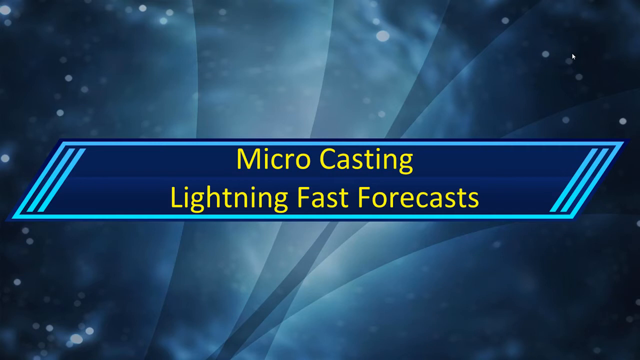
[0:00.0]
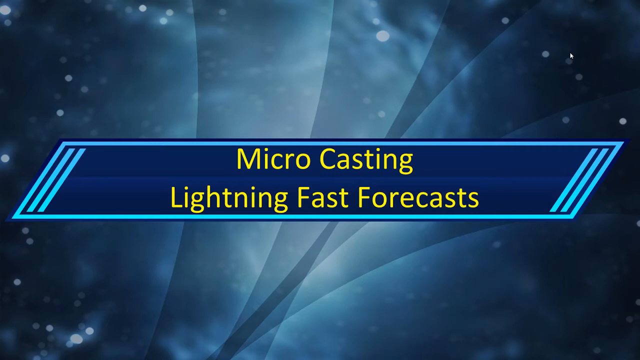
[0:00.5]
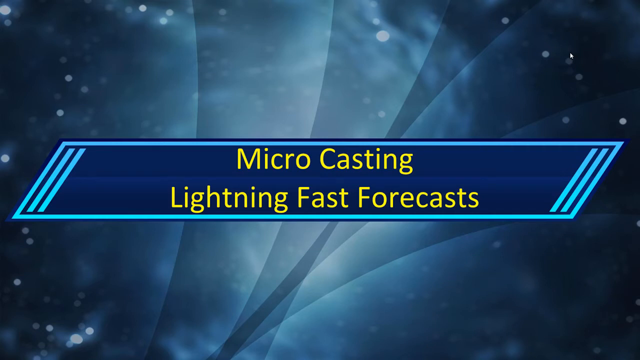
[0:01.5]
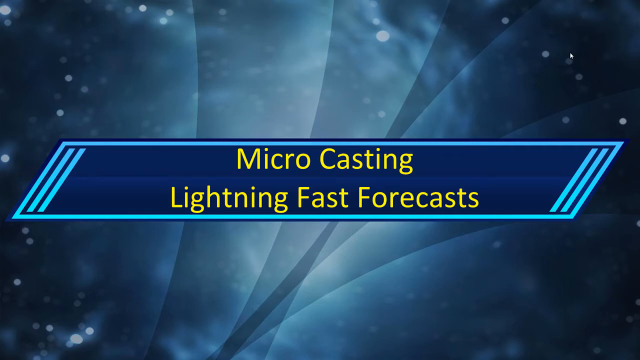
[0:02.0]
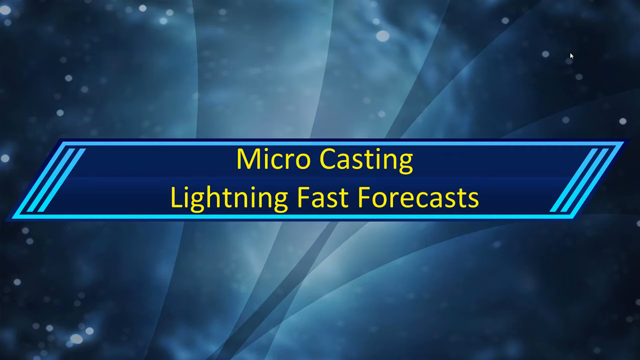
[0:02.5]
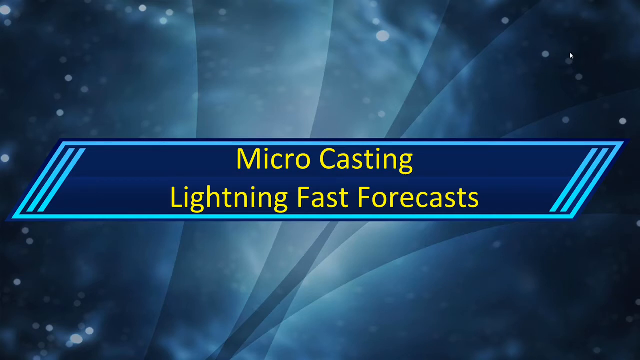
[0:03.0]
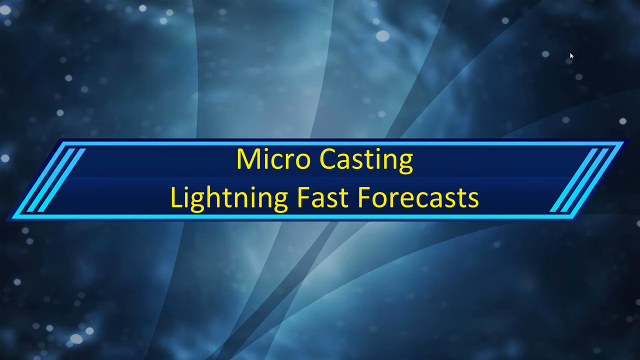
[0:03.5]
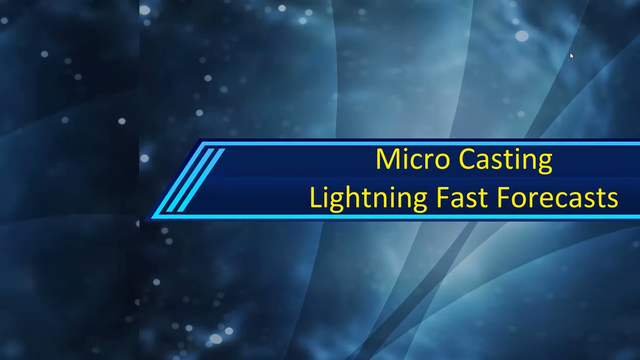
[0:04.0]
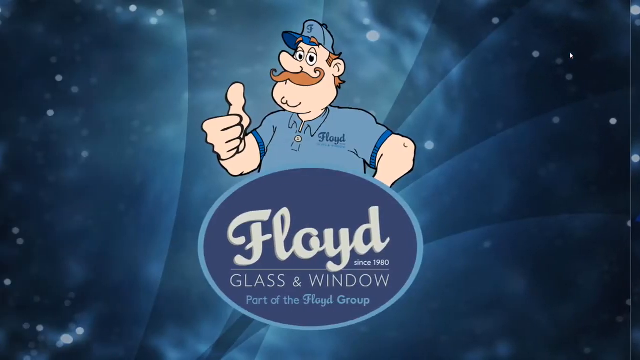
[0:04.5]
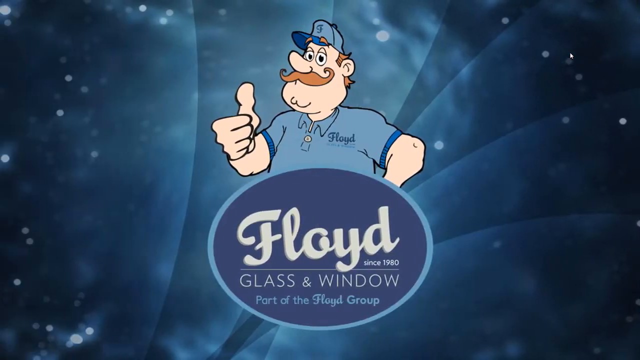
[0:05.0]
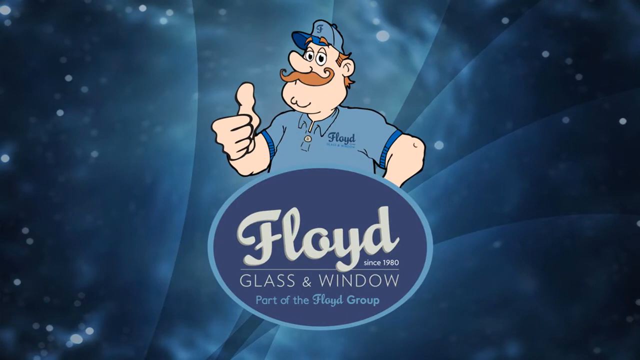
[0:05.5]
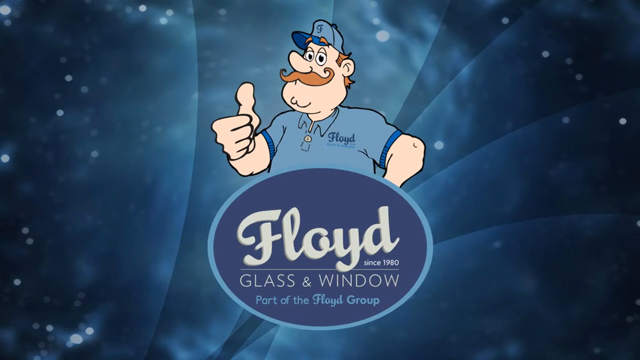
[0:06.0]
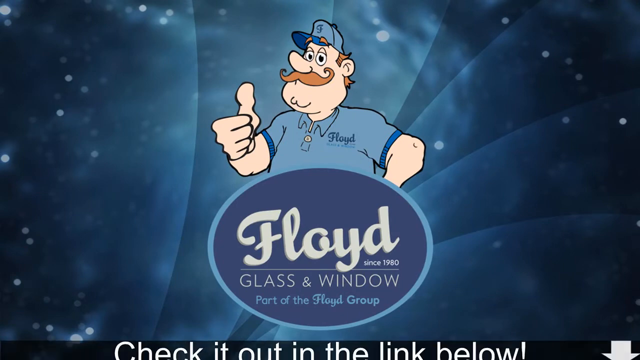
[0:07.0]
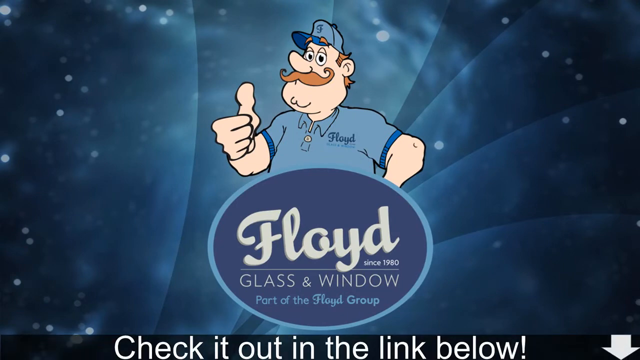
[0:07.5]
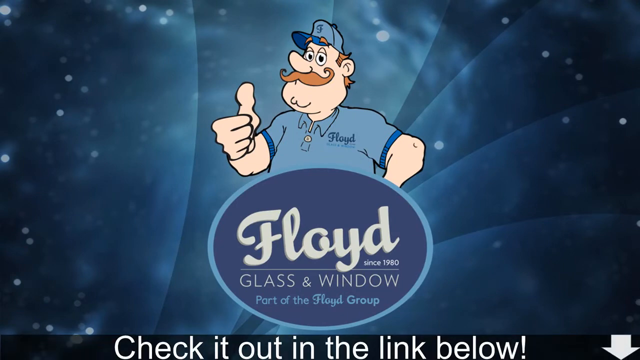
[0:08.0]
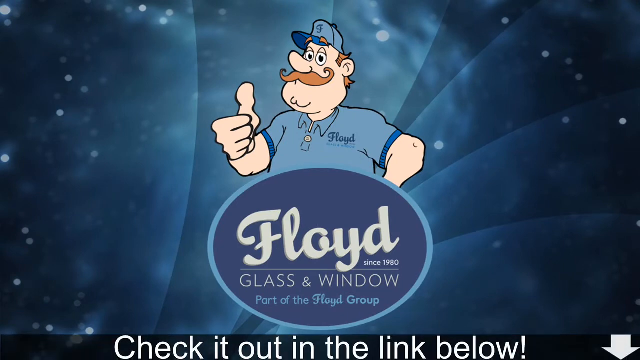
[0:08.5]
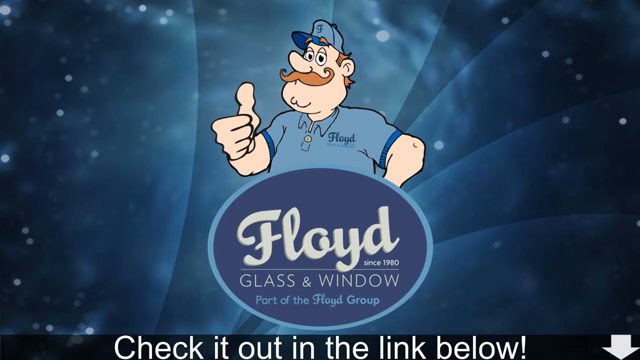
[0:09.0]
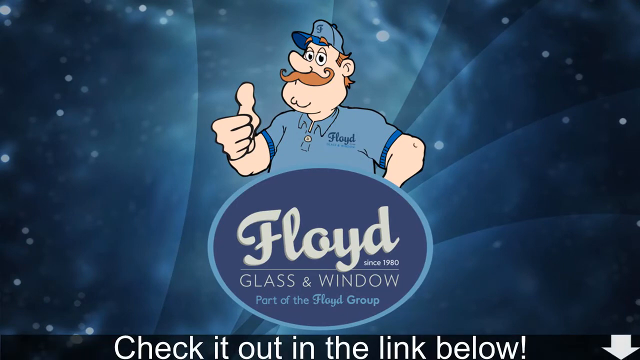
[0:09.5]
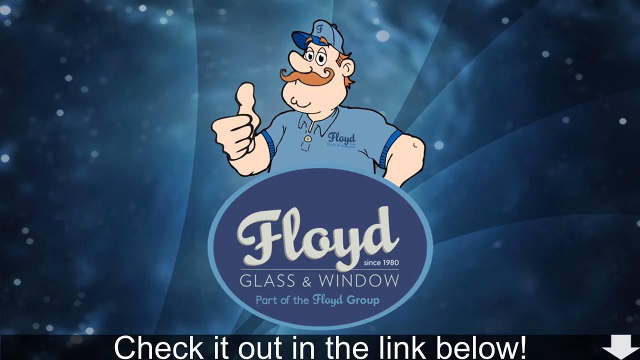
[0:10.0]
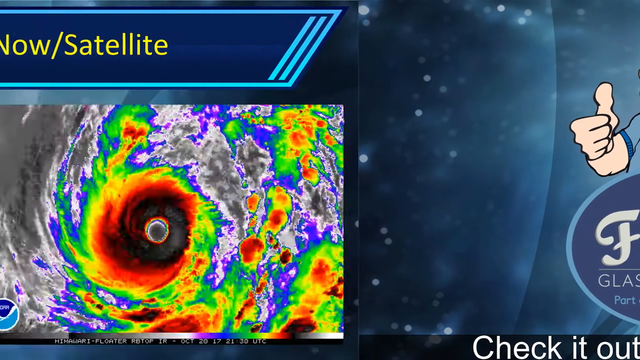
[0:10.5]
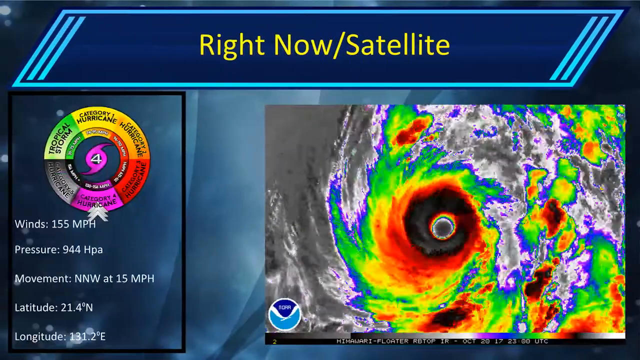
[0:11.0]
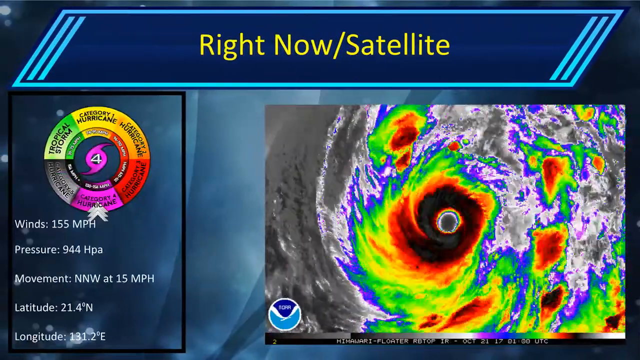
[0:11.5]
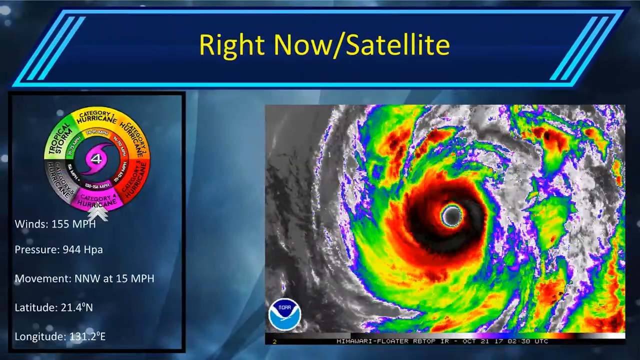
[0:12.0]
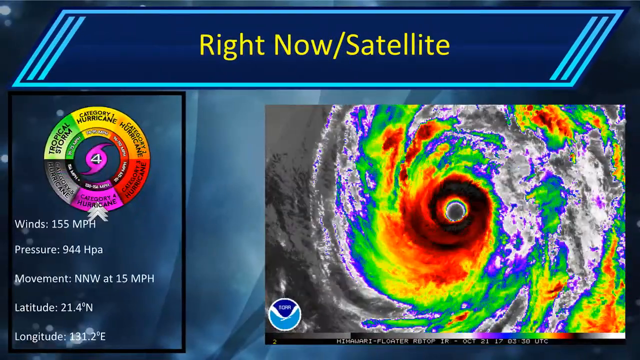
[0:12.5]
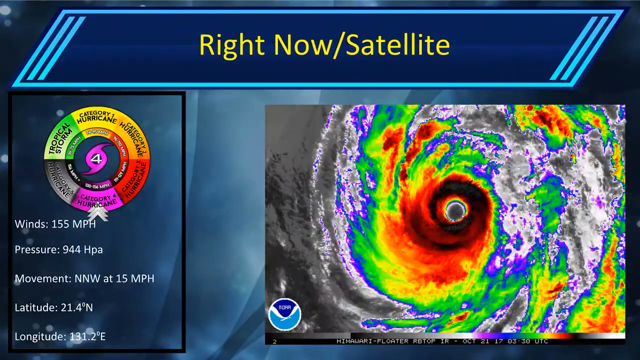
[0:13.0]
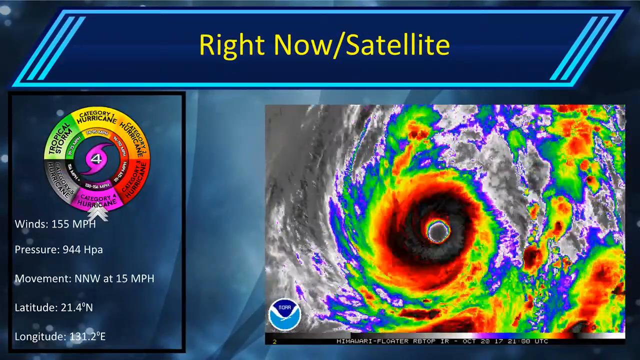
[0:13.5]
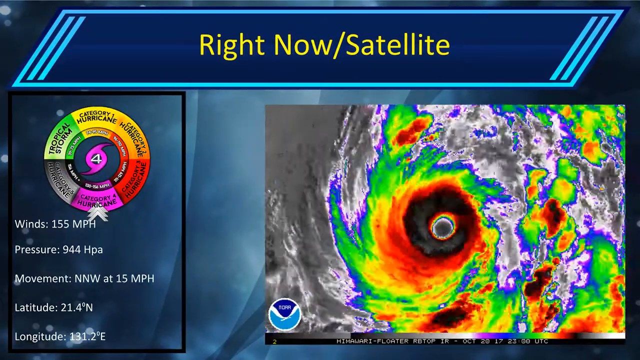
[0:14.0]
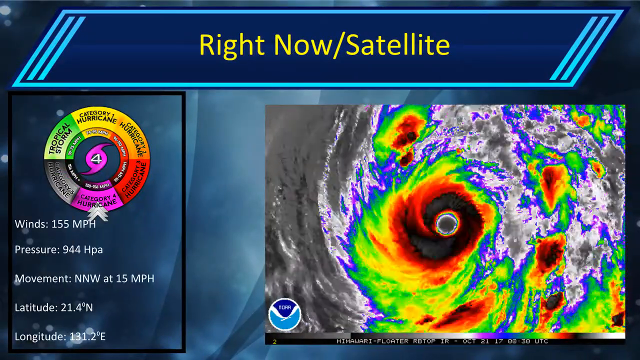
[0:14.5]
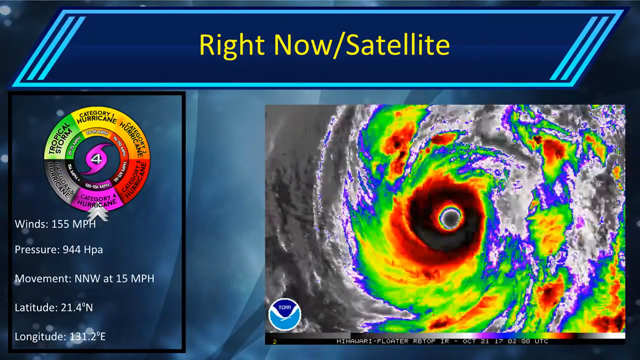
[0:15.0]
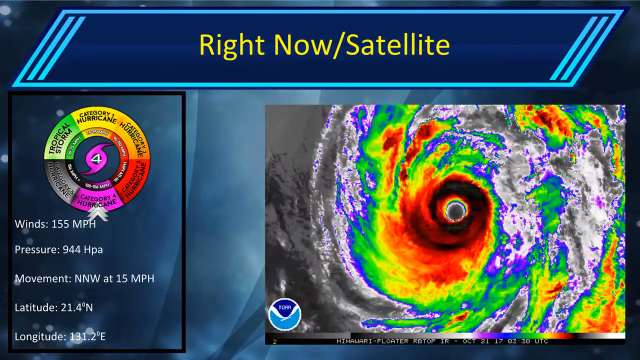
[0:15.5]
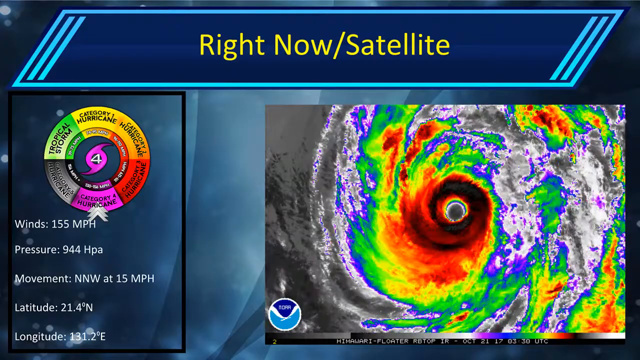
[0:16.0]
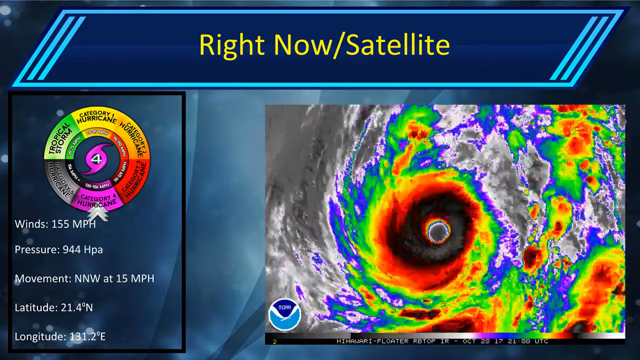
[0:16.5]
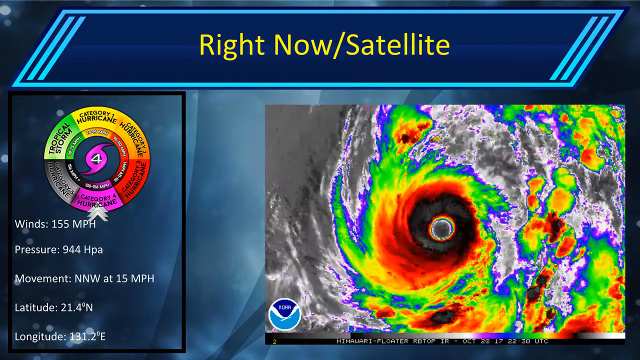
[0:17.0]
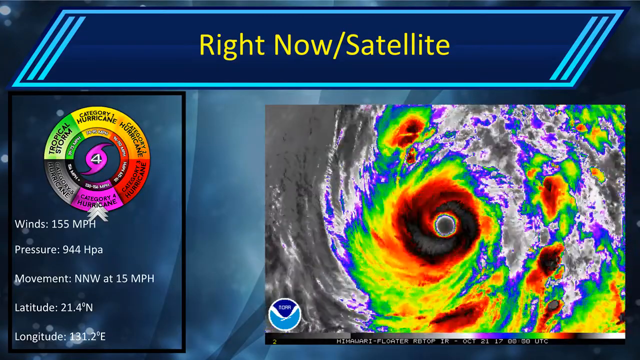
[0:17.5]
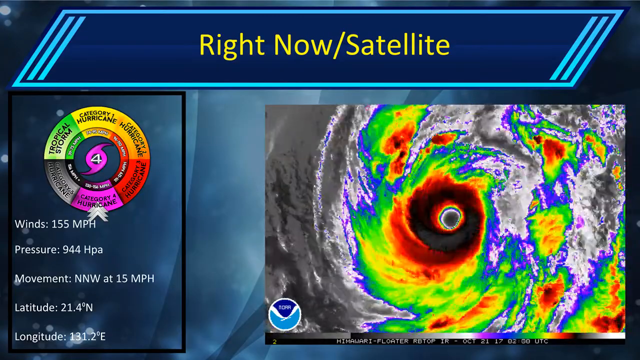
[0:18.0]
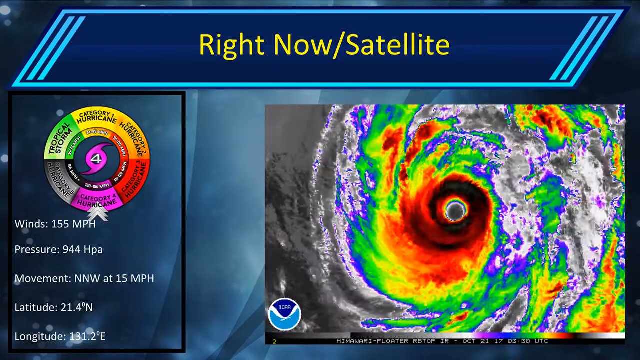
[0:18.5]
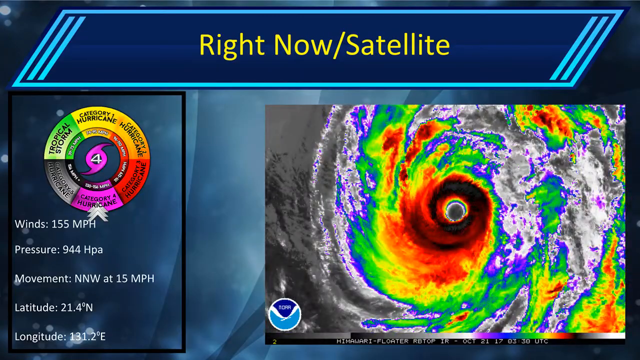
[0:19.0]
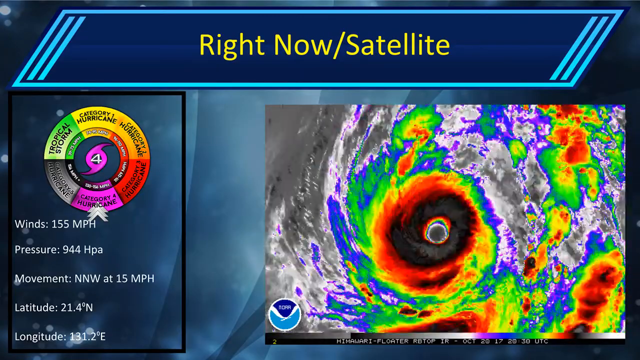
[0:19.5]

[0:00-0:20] The video opens on a blue background that looks like space, with some lines in front of it. In front of that is a small dark blue banner outlined by a light blue line, its edges cut off so it forms an angled rectangle. In the center of the dark blue banner, yellow text reads "microcasting, lightning fast forecasts". The screen slides to the right, bringing in another image on top of the space background showing Floyd Glass and Window, a company, along with its logo: a cartoon man giving a thumbs up, with an orange mustache and orange hair, wearing a blue hat. The screen slides to the right again, and the blue banner appears at the top of the screen, this time with "right now/satellite" in yellow in its center. Below it, on the left side, are stats about the current storm: a wheel showing the different categories, set on category four hurricane, and below that the winds, pressure and other measurements of the storm. On the right side is a live look at the storm moving, seen from above, showing the storm's eye.